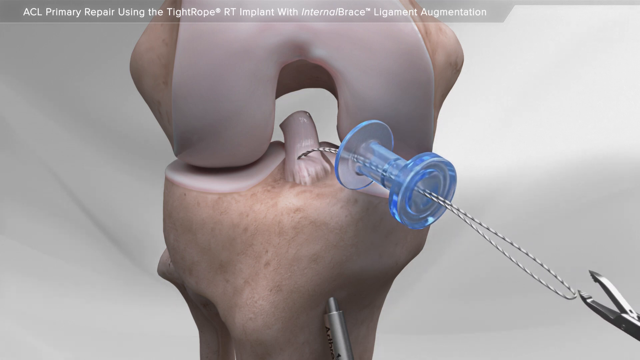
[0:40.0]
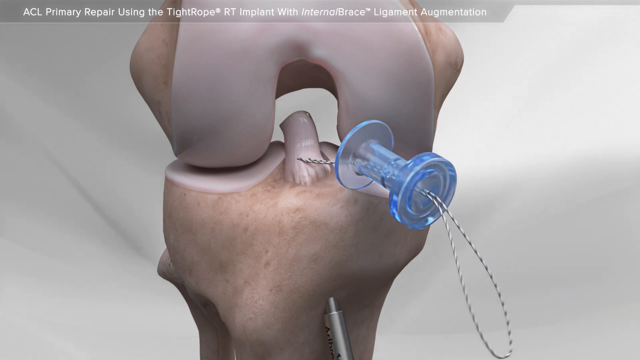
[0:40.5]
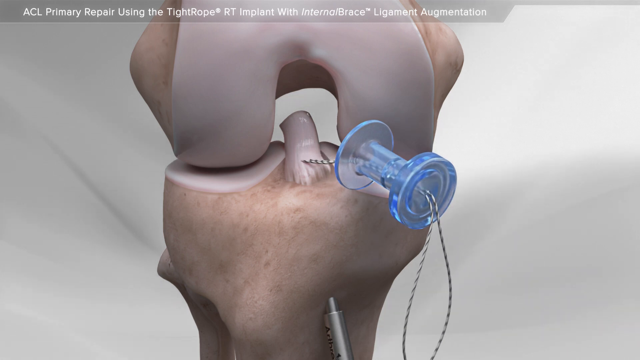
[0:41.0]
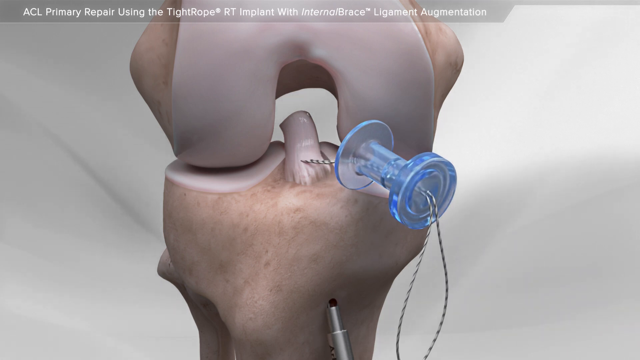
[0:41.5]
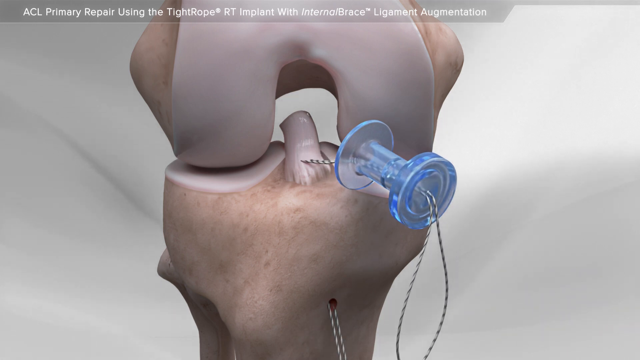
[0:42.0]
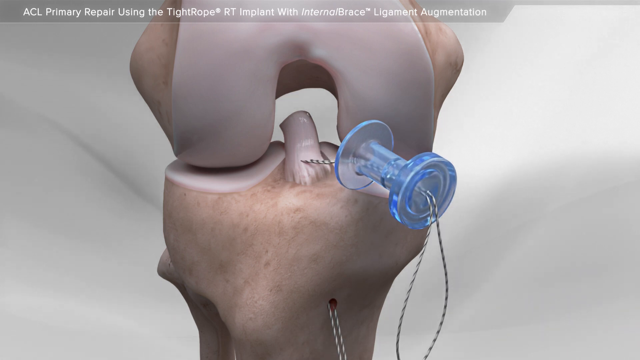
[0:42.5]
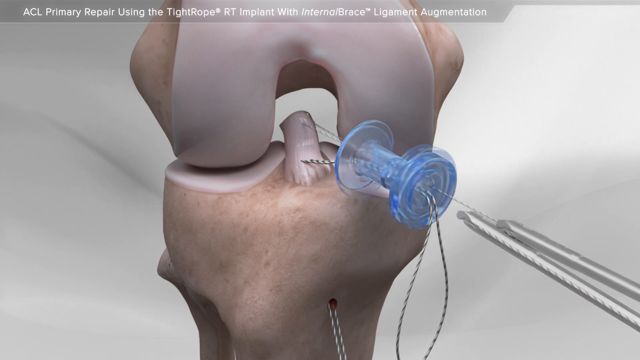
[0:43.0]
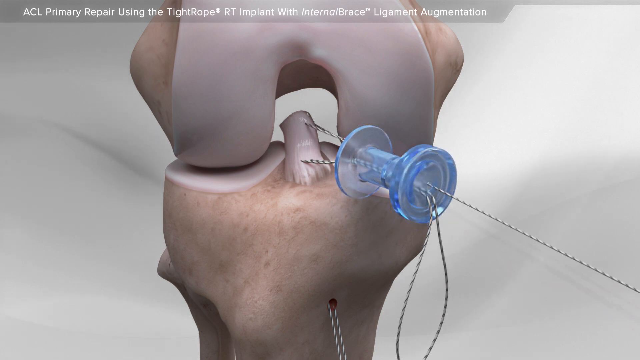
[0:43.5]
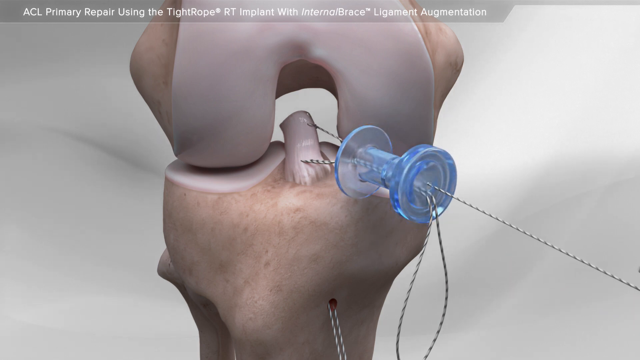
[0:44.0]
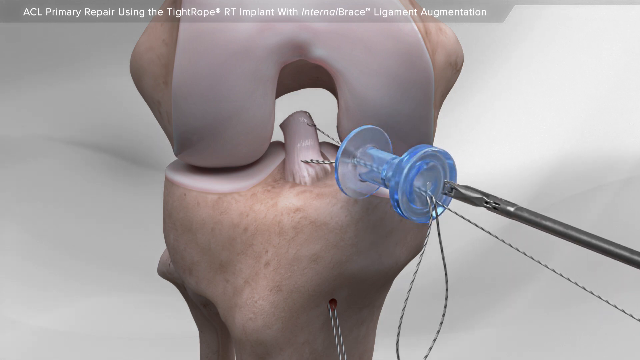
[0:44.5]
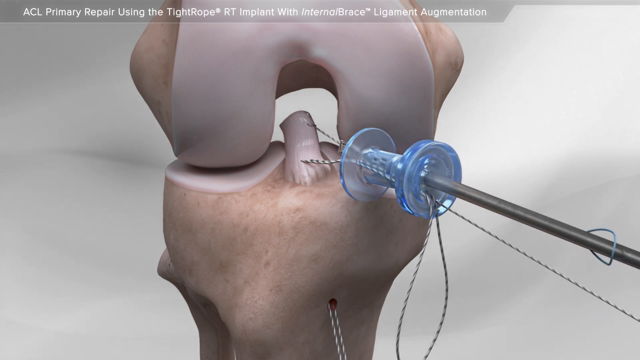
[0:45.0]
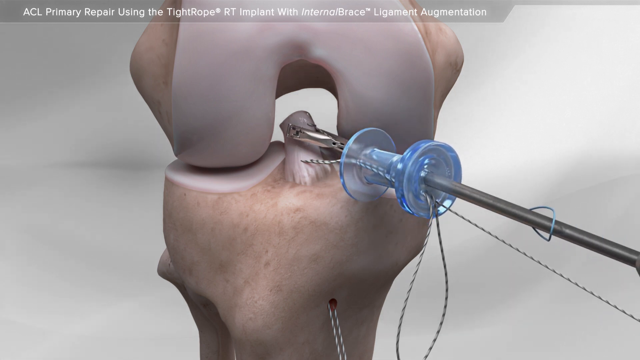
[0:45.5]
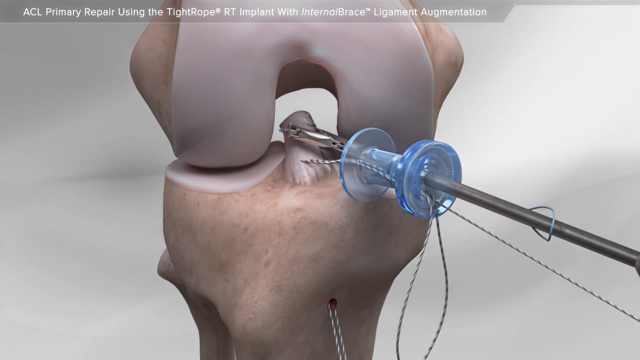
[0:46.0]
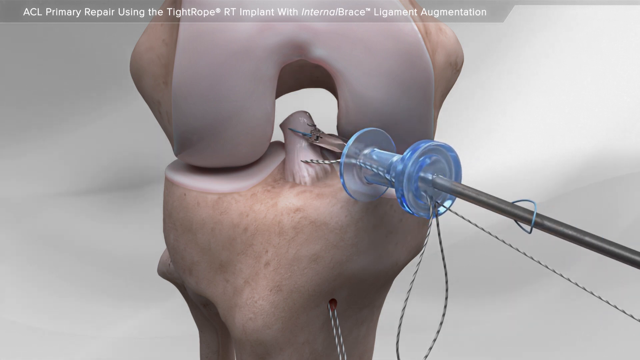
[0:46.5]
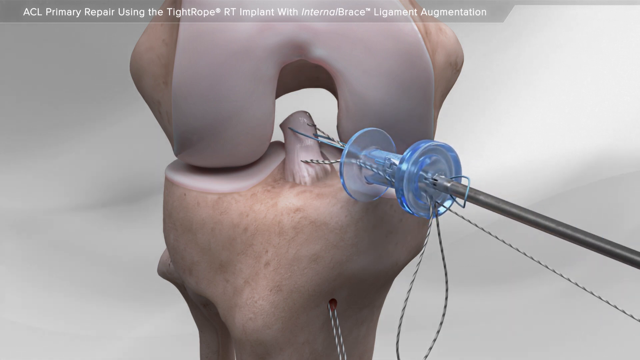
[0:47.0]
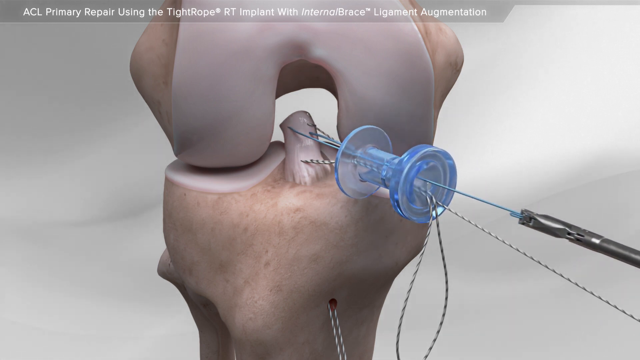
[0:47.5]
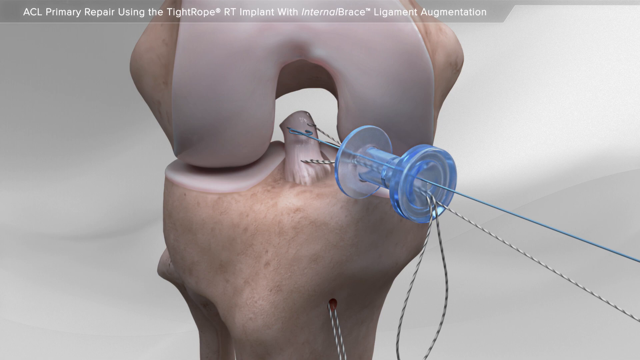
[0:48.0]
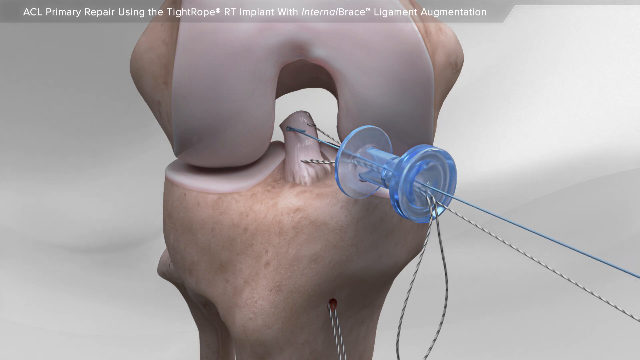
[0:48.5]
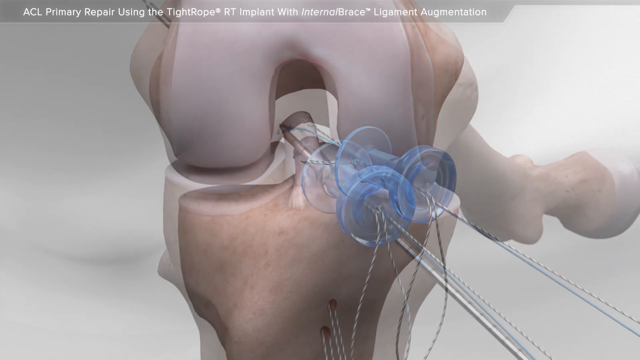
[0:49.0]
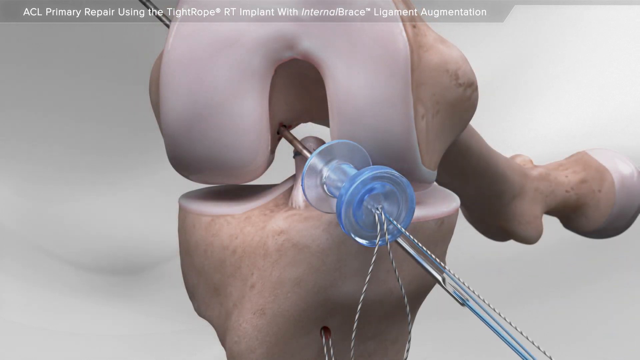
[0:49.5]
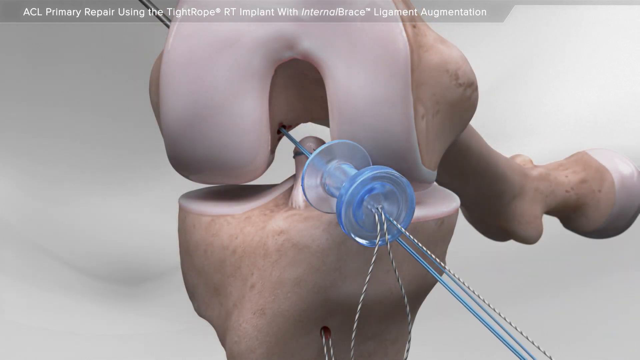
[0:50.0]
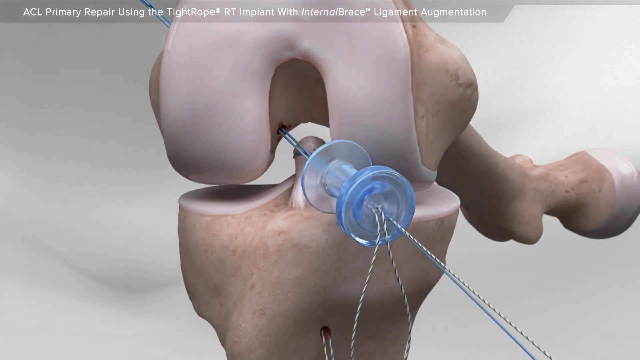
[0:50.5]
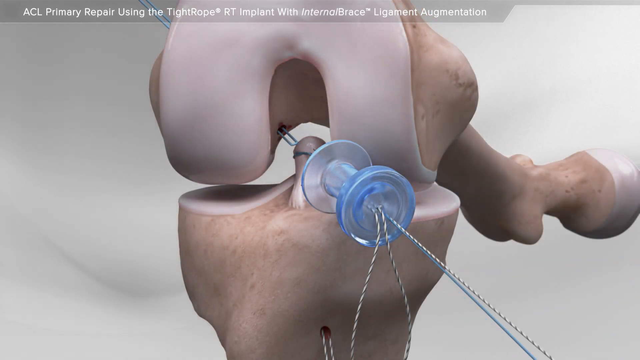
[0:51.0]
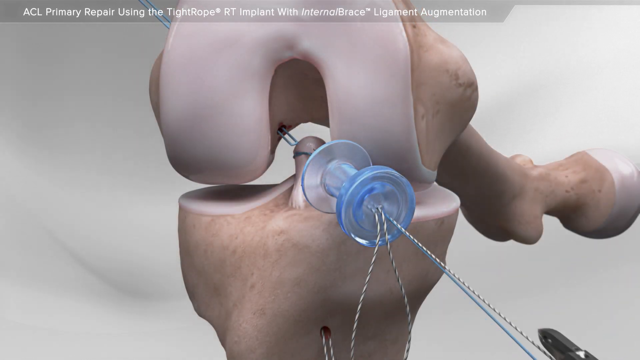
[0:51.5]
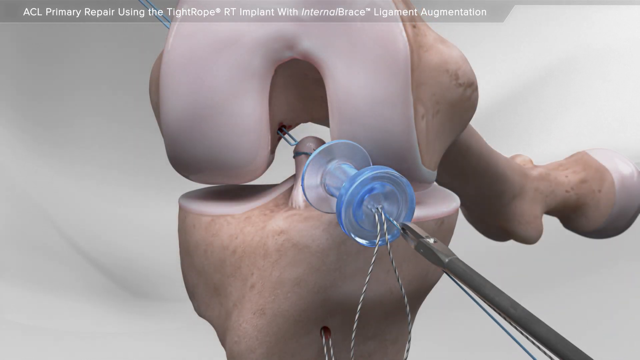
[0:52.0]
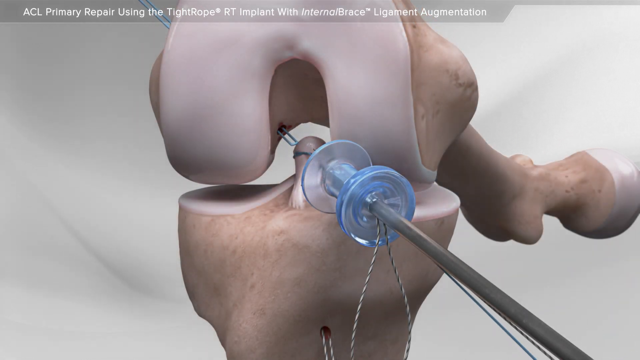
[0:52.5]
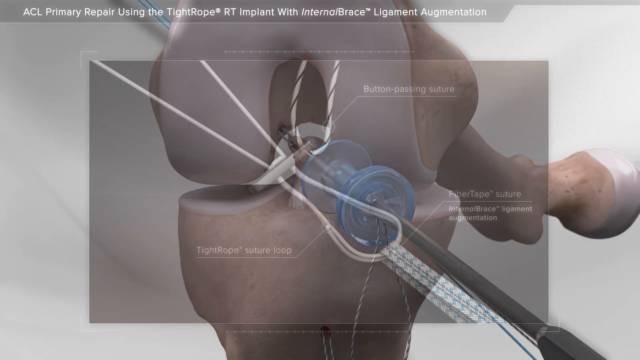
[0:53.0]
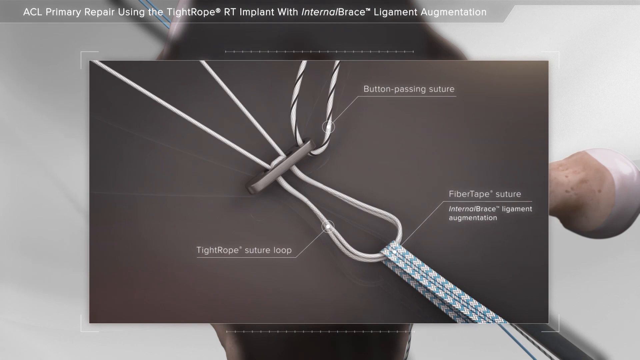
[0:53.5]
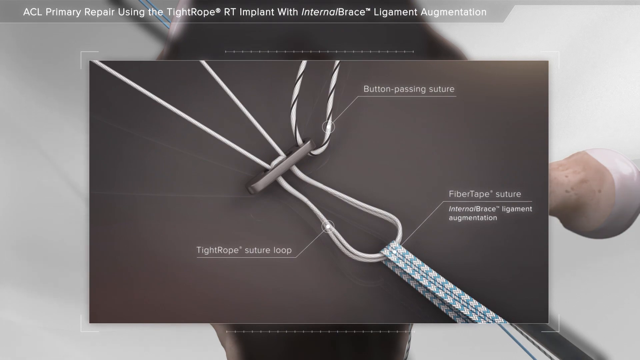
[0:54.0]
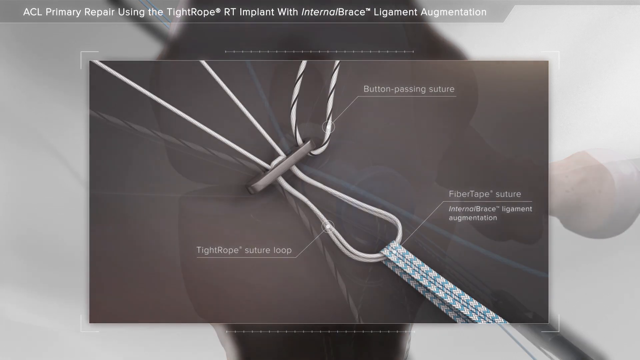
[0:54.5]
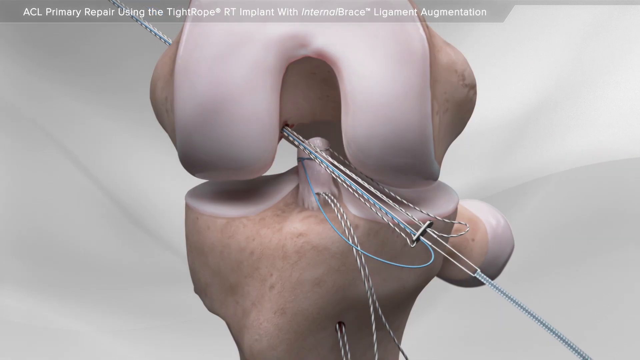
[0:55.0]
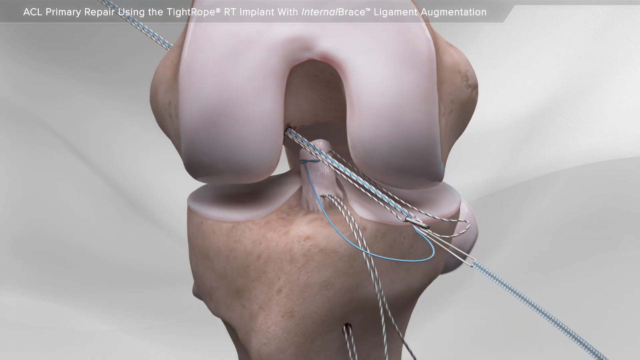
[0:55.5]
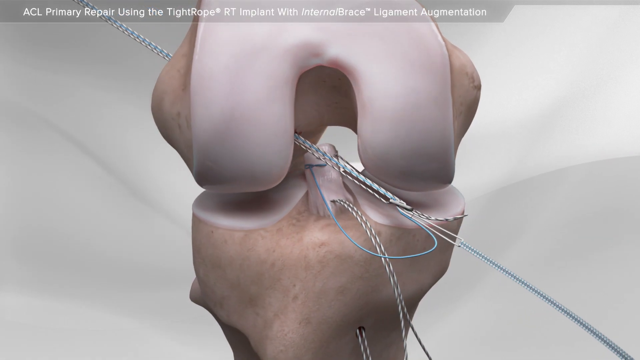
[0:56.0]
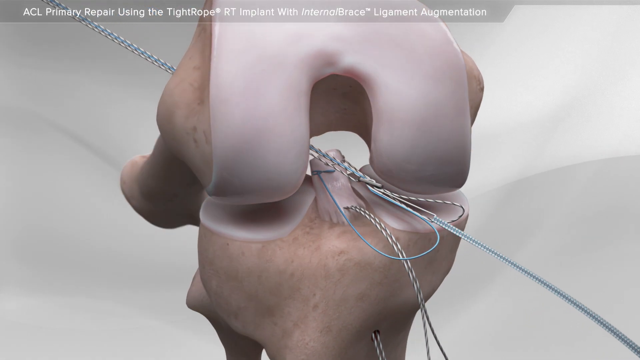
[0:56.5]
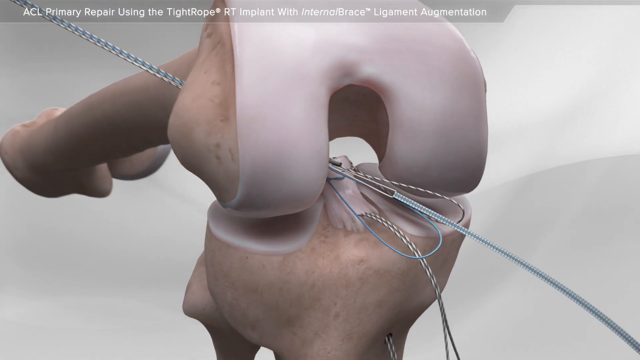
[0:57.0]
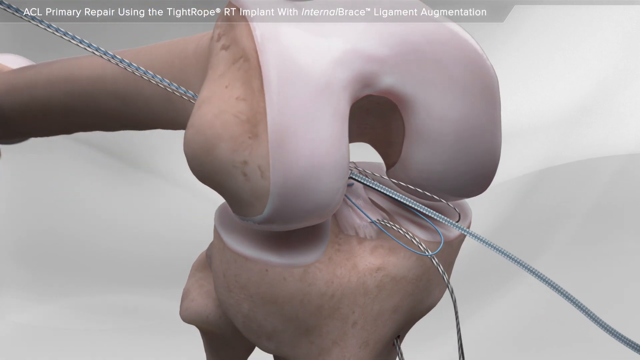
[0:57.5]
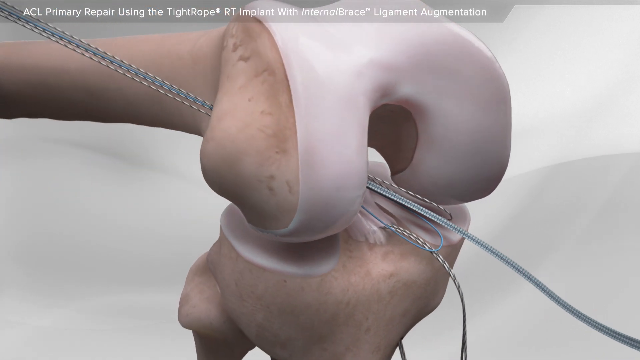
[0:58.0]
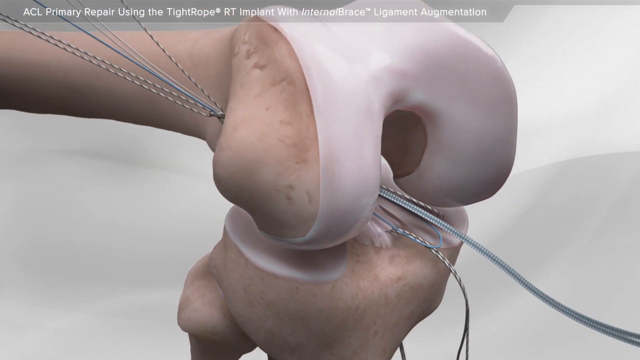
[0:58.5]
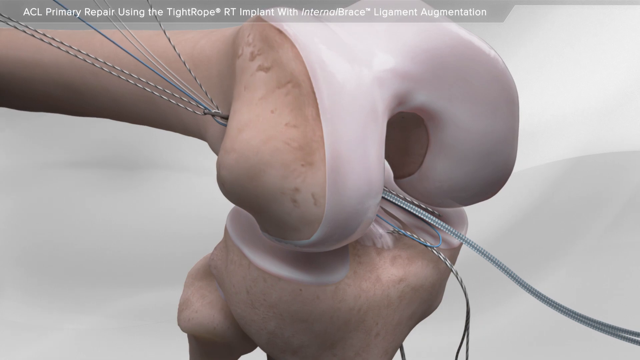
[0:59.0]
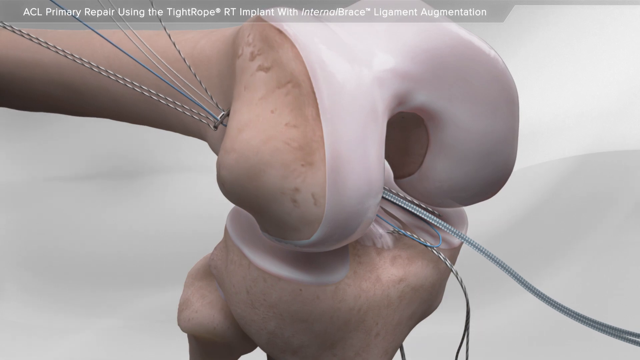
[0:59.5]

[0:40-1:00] Bones are on the screen, with a small piece sticking up between them in a little hole. A bluish, clear-looking tube has string through it, and the string is connected to the fragment that is sticking up. The string appears to be pulled tightly, and there is another string lower down on the bone piece. A very thin metal piece and a larger metal piece are inserted into the tube, and string is attached to this piece as well. A metal rod goes through the bone, and the metal piece is pulled all the way through, and a larger metal piece is inserted into the tube as well. Additional strings are added and pulled through to the other side of the bone.